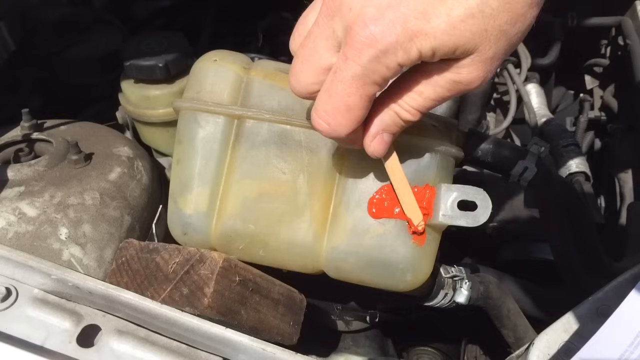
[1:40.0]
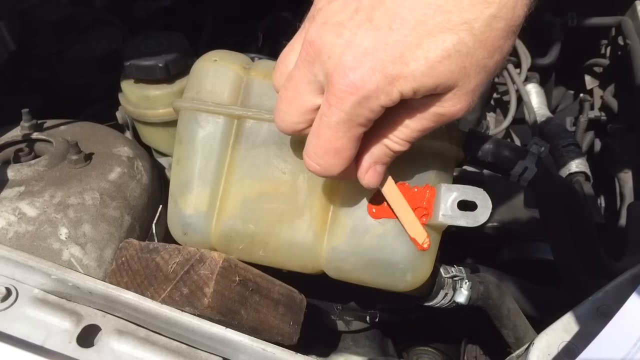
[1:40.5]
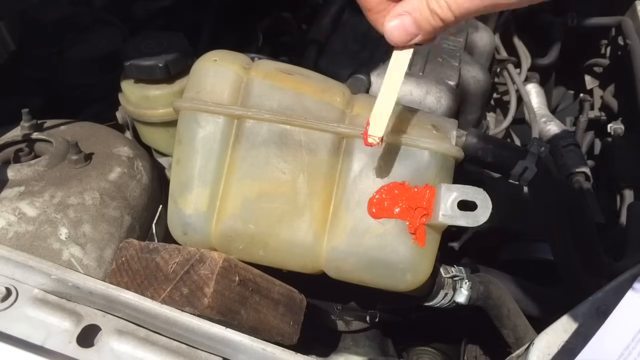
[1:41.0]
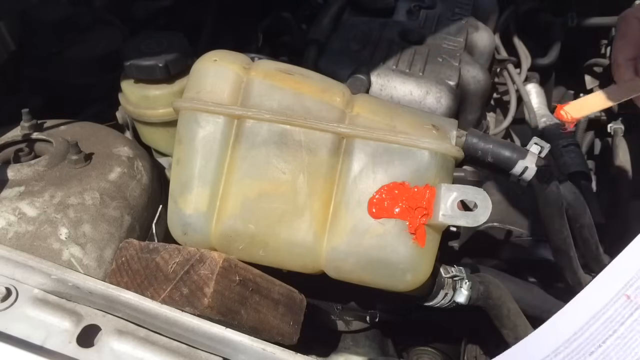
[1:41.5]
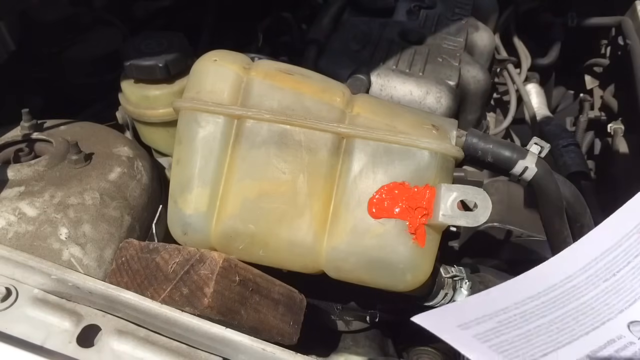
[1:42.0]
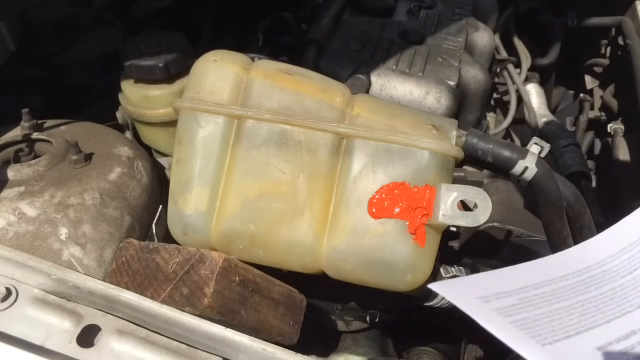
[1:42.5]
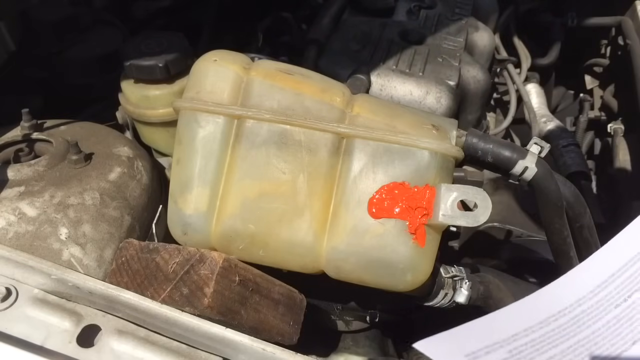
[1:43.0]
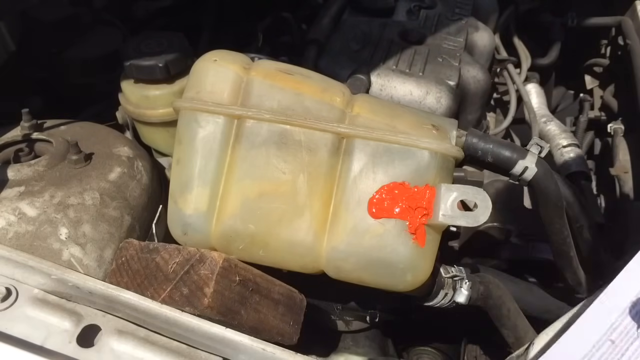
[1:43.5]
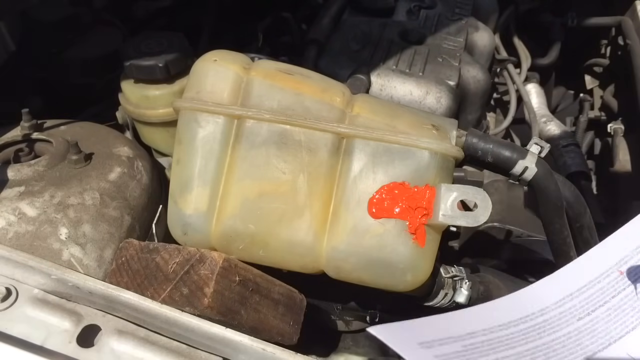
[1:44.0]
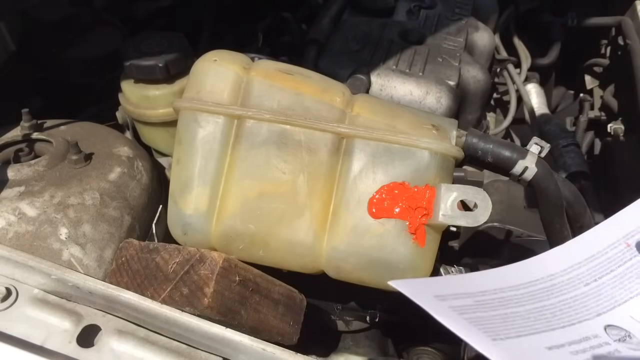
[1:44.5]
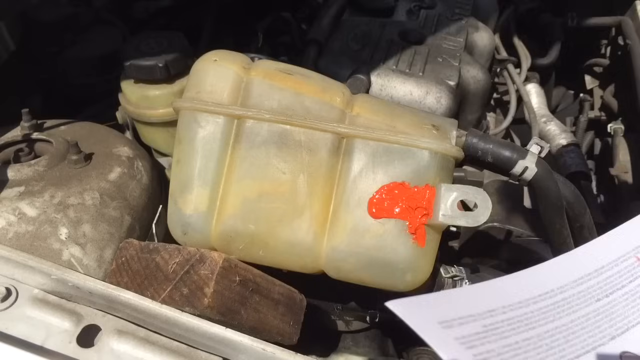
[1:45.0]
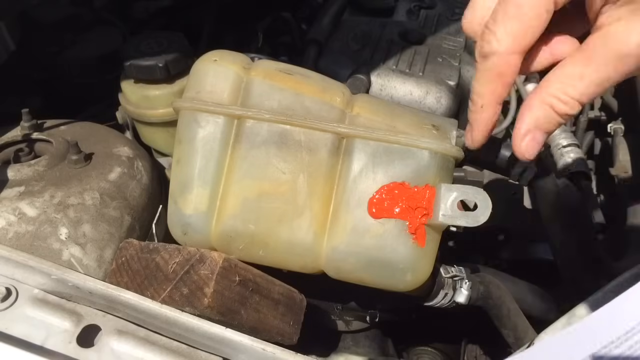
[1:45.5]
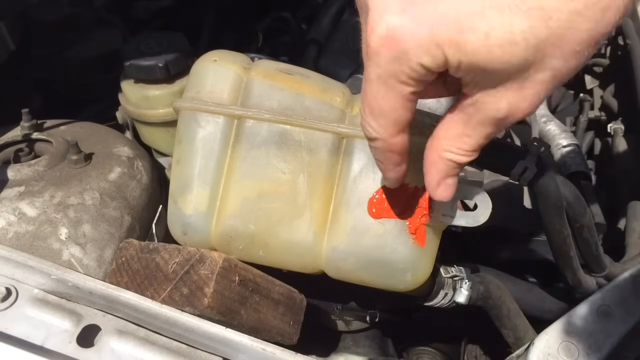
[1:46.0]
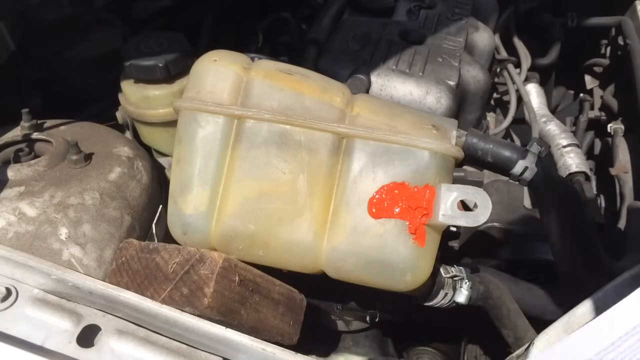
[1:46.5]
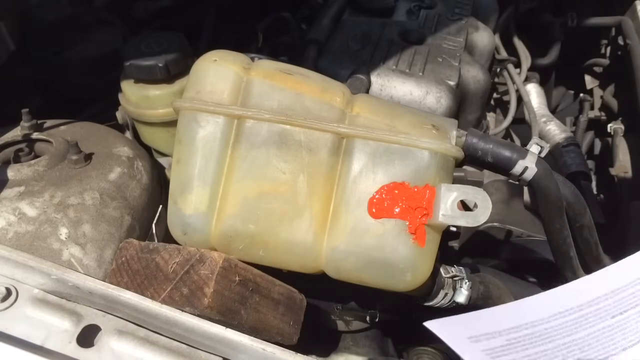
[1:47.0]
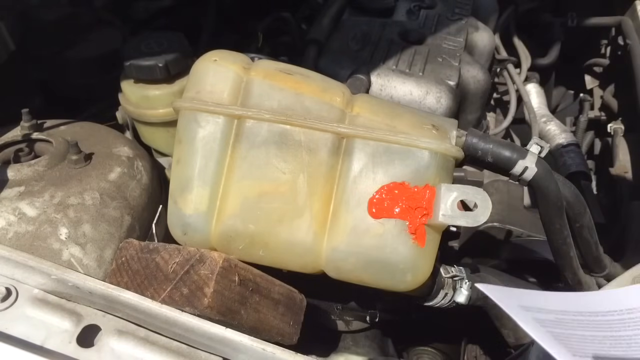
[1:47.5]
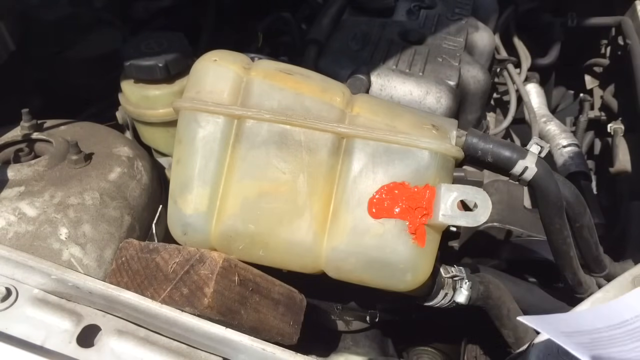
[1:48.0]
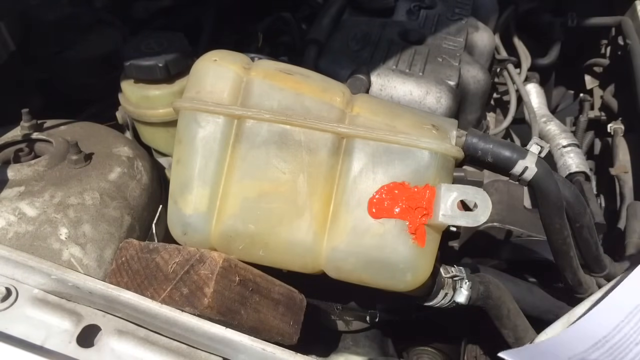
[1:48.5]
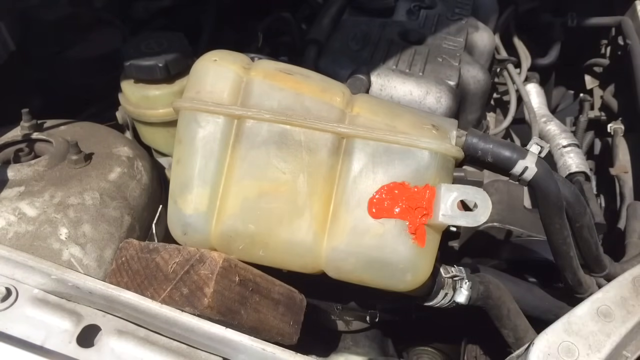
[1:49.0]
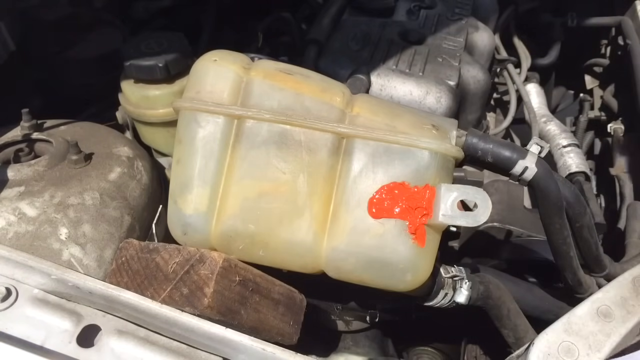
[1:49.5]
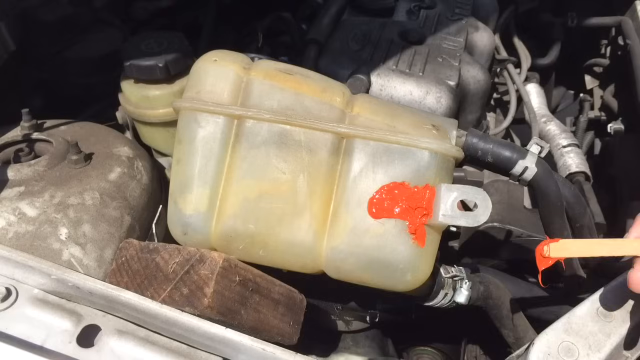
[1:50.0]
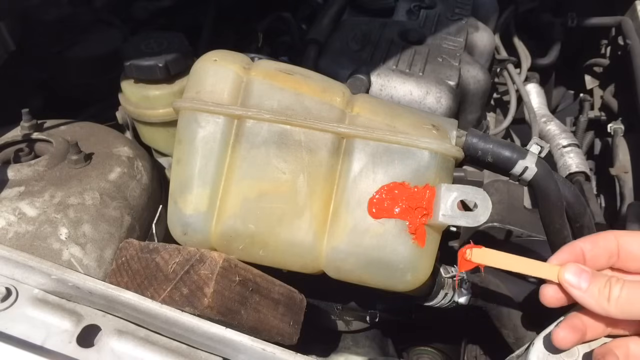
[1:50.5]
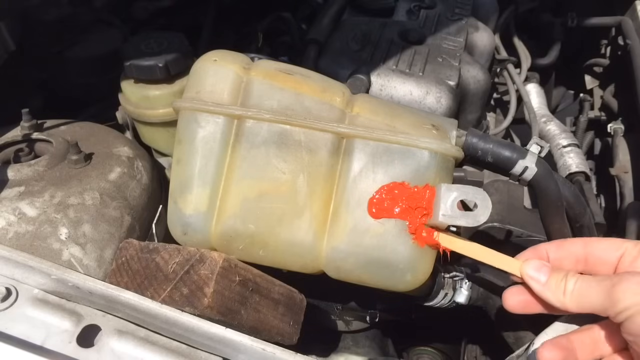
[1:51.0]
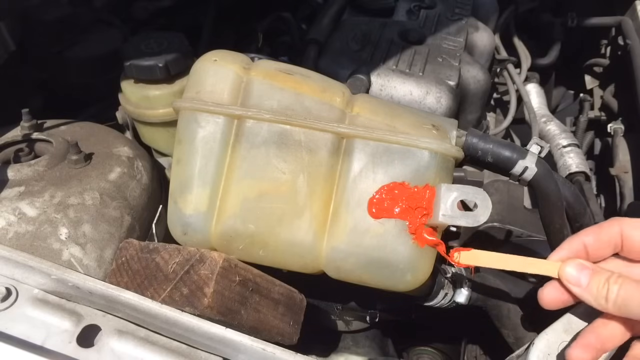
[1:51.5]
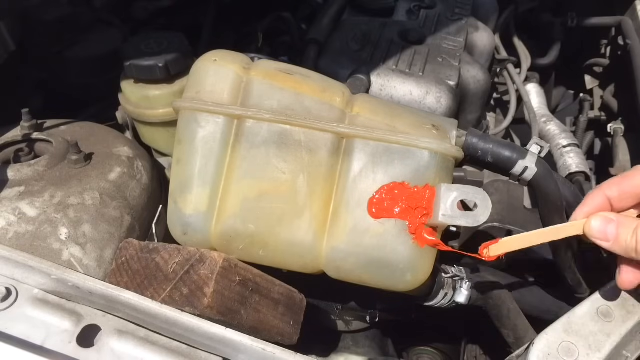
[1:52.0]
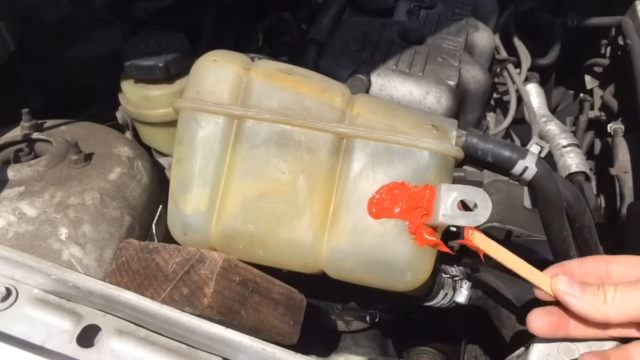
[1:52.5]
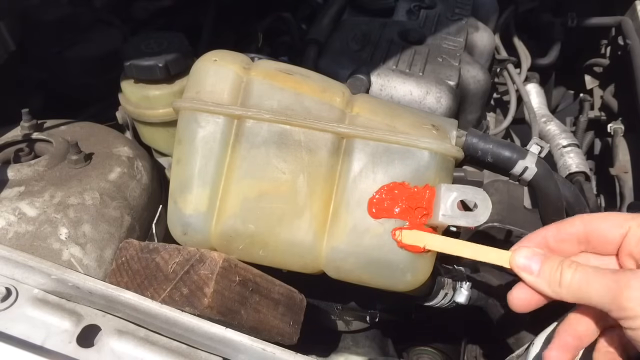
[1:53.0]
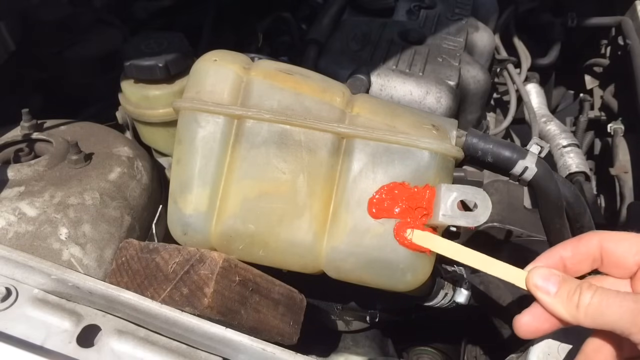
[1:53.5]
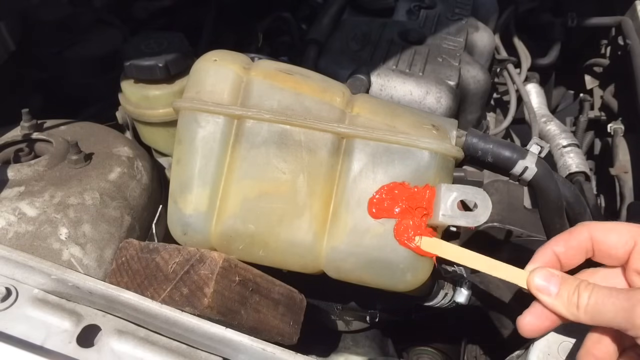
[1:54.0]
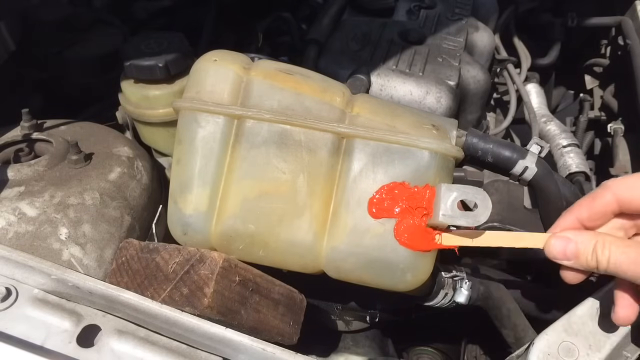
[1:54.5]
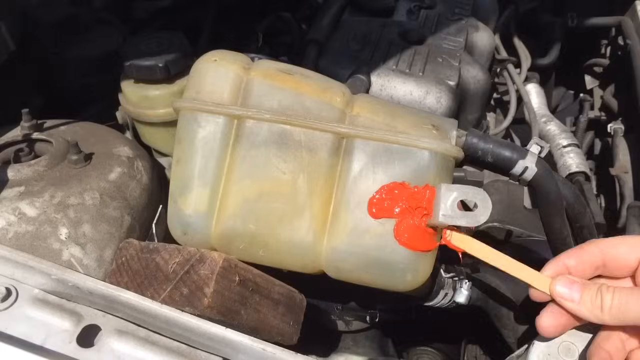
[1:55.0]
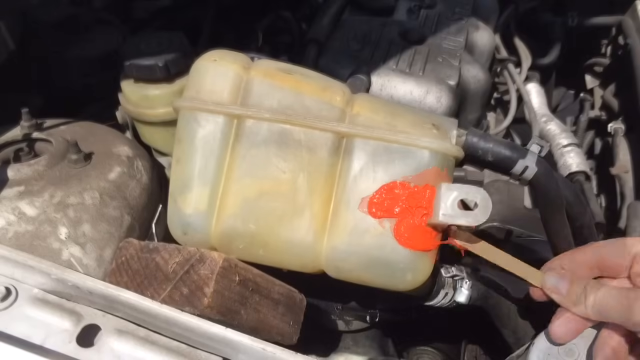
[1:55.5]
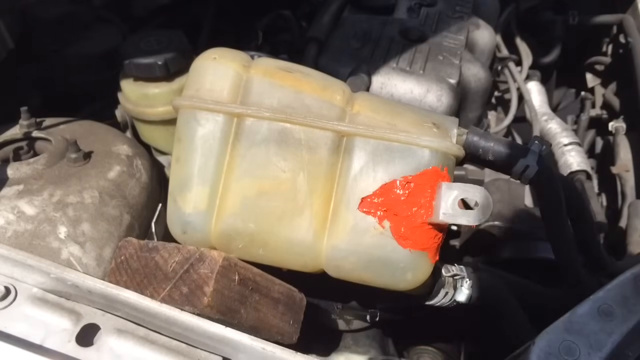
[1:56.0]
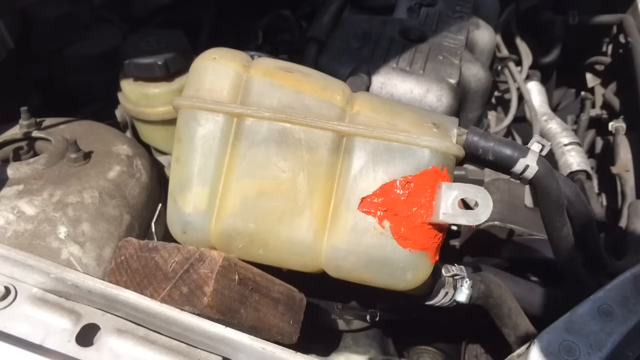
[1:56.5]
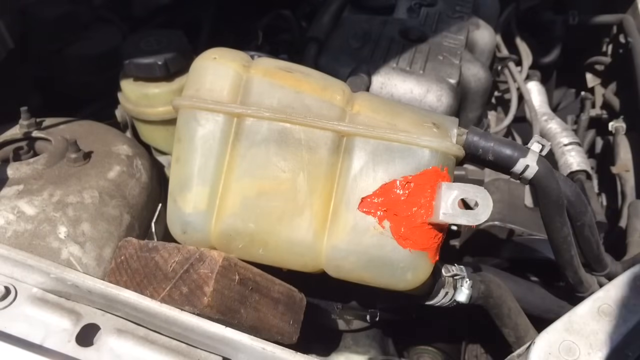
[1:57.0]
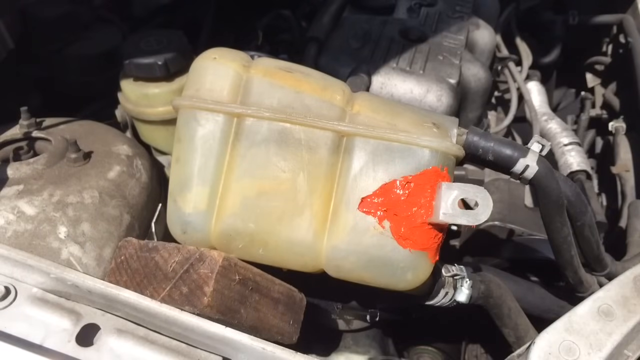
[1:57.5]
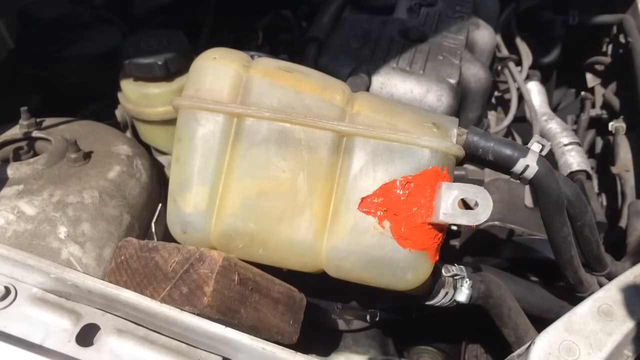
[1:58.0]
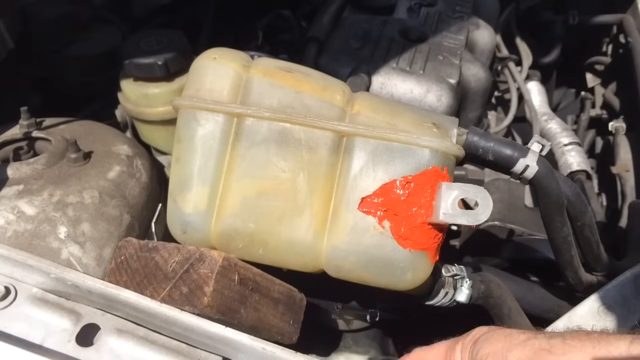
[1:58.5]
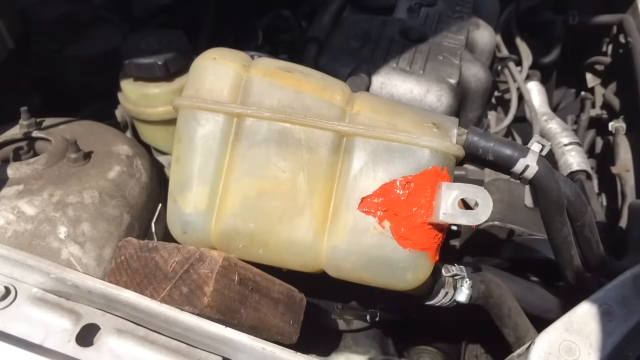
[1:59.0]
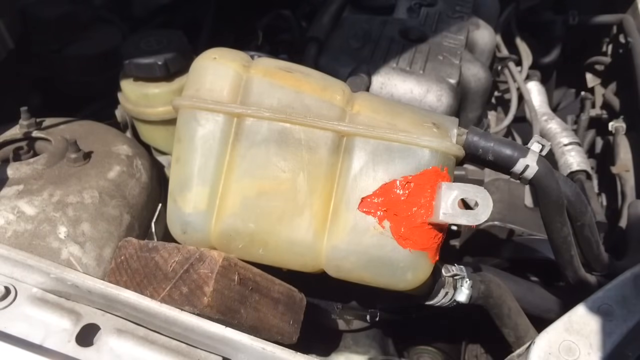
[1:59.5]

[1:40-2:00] A close-up view shows an automobile's engine compartment, with the camera zoomed in on an off-white beige plastic coolant reservoir. It is next to the power steering fluid reservoir, and behind the tank are many plastic and rubber hoses as well as the metal engine and other components. A hand holds a small wooden spreading stick, spreading an orangish-red substance over the bottom right portion of the coolant reservoir. The hand reaches down and spreads the substance into a smooth layer, then rises, and a piece of paper comes into view, used to wipe the stick clean. The person's shadow can be seen on other parts of the engine as they stand over it. They reach down with the right hand, making a pinching motion right above the orangish-red substance and motioning up and down. The person then reaches in with another glob of the orange-red substance and wipes it around the bottom portion of the extended plastic tag, making sure the entire bottom part of the coolant tank is covered in the bonding seal.